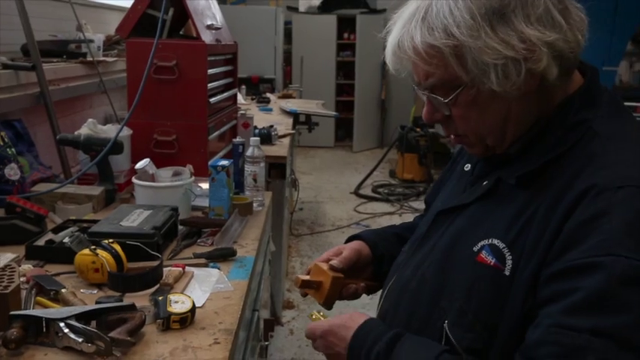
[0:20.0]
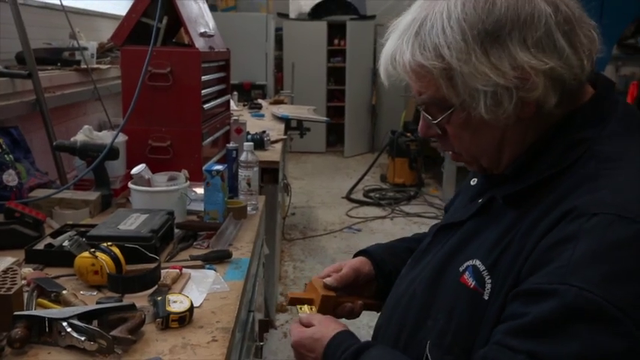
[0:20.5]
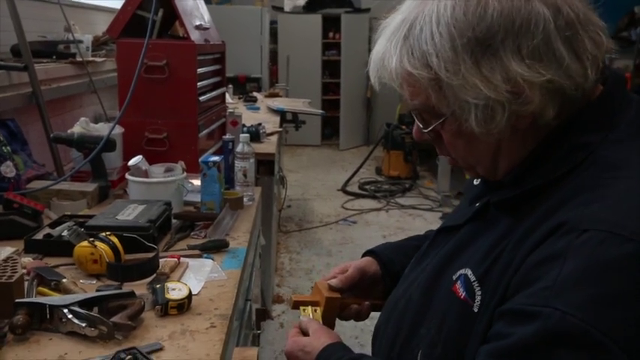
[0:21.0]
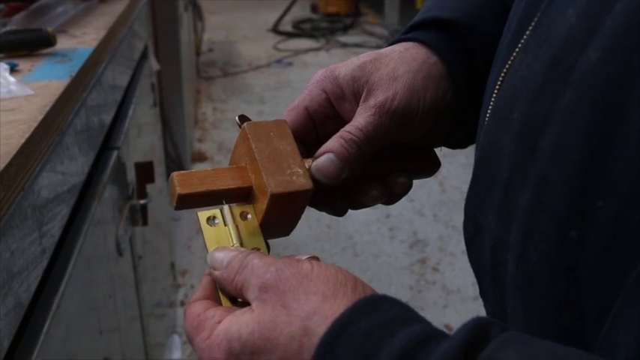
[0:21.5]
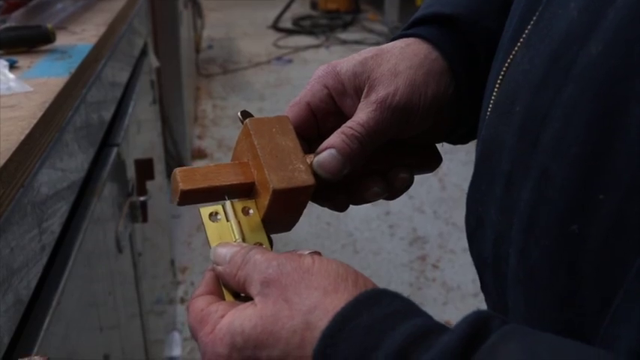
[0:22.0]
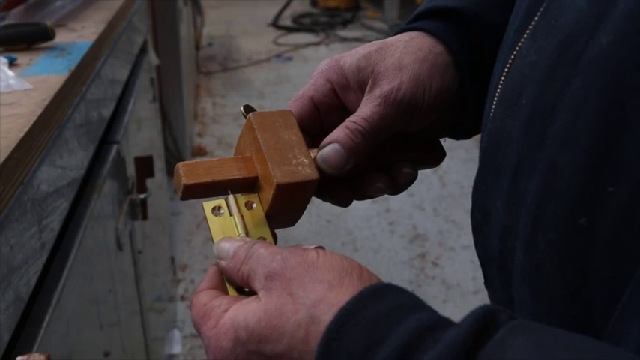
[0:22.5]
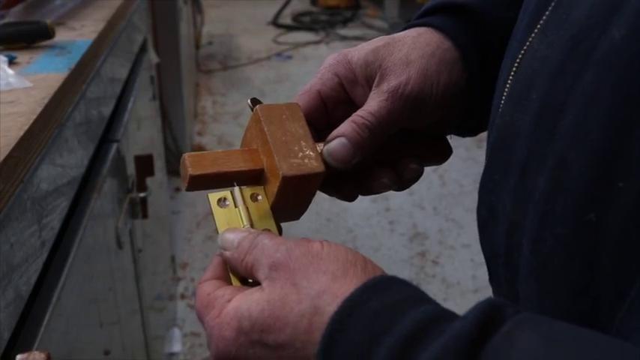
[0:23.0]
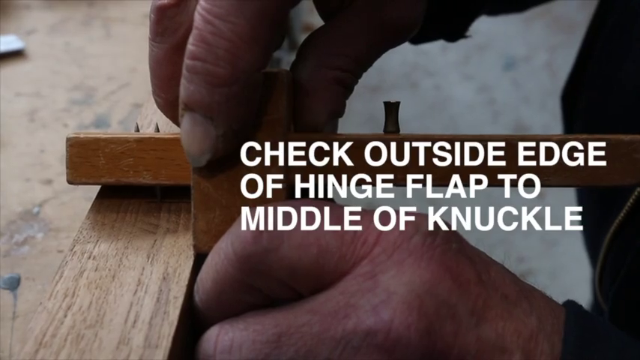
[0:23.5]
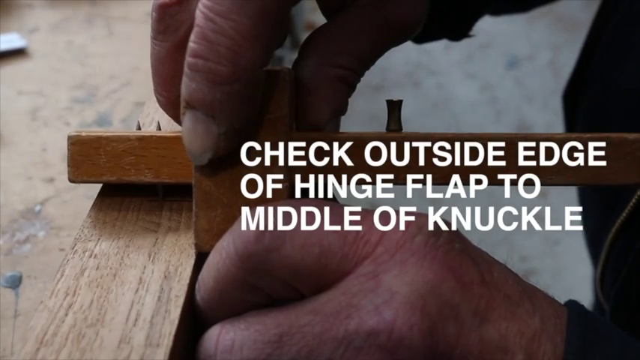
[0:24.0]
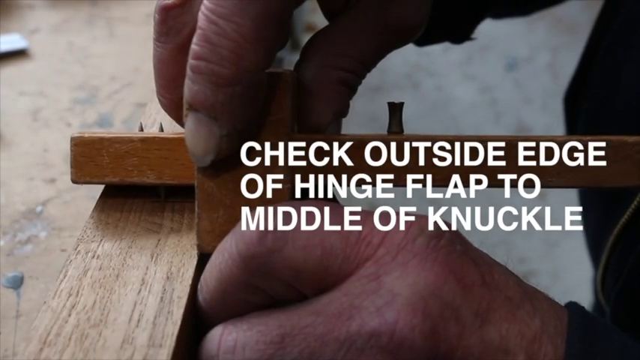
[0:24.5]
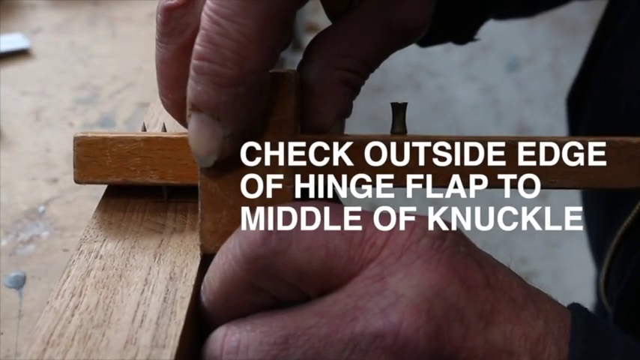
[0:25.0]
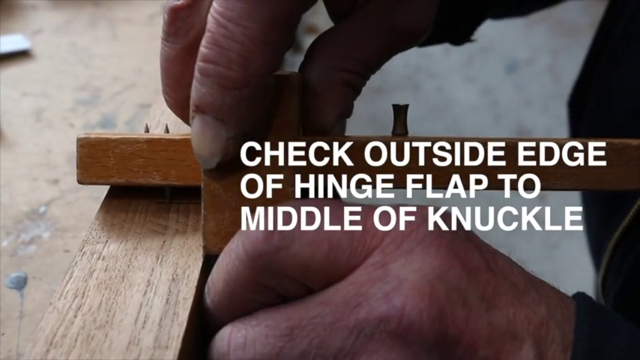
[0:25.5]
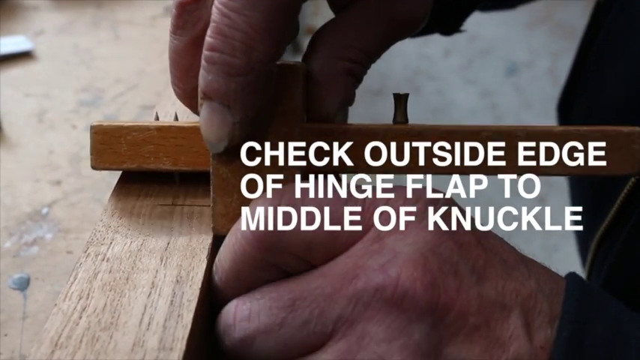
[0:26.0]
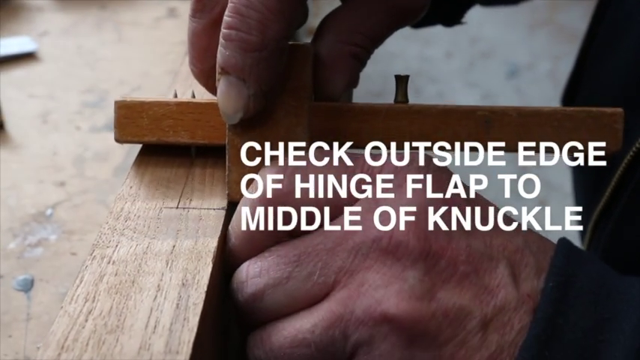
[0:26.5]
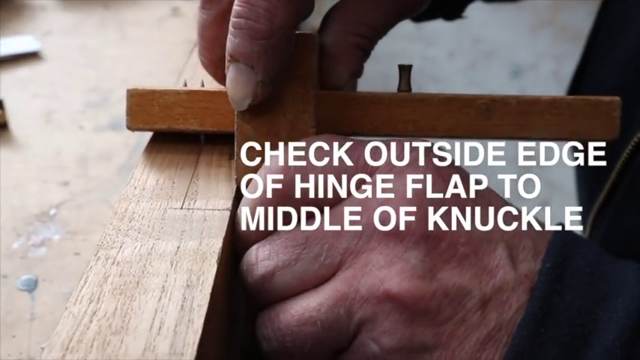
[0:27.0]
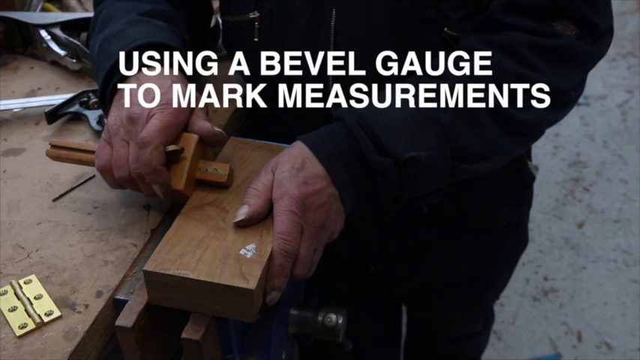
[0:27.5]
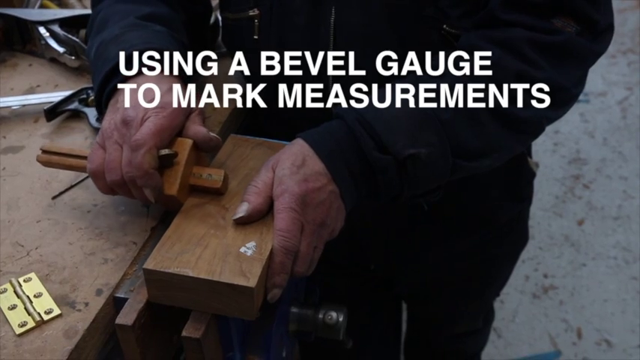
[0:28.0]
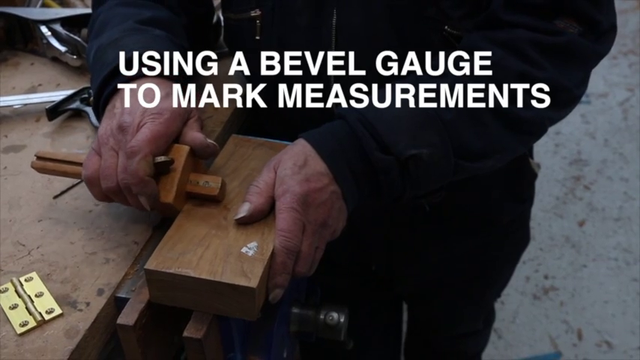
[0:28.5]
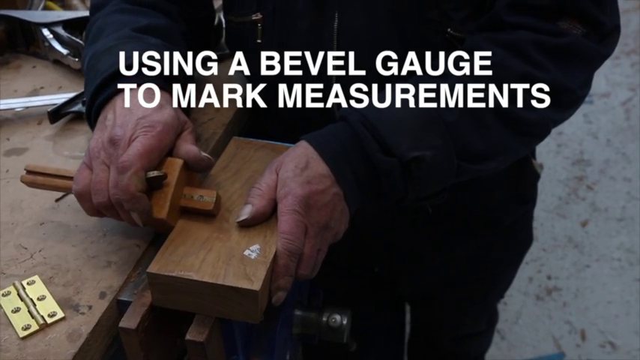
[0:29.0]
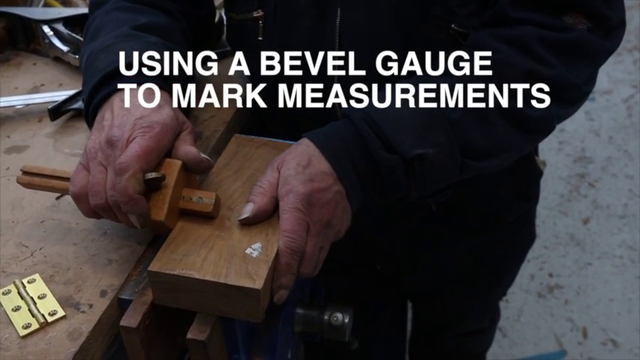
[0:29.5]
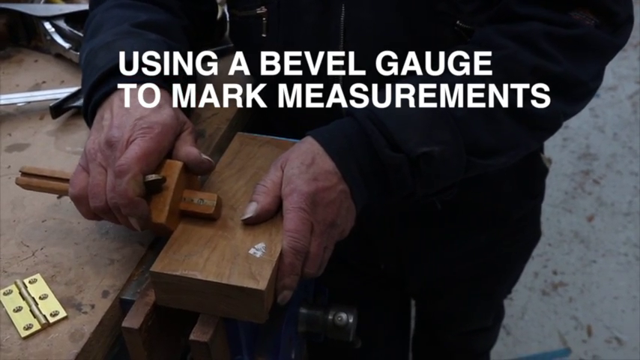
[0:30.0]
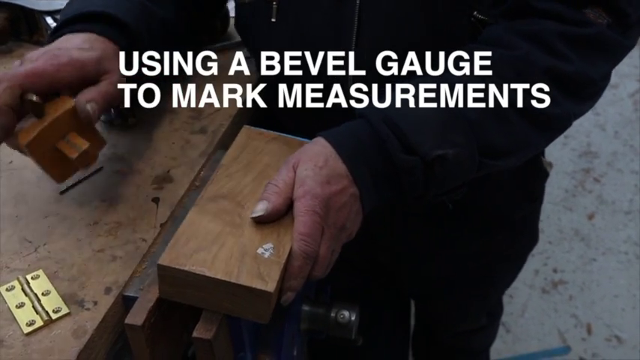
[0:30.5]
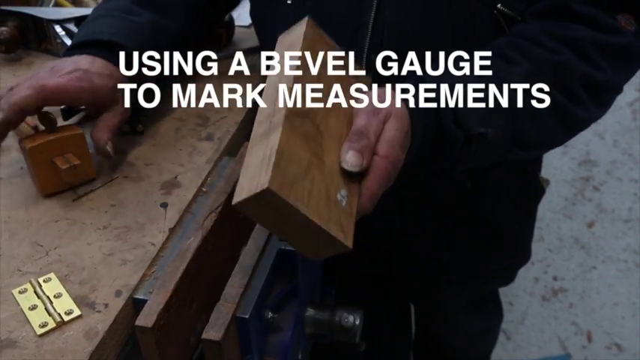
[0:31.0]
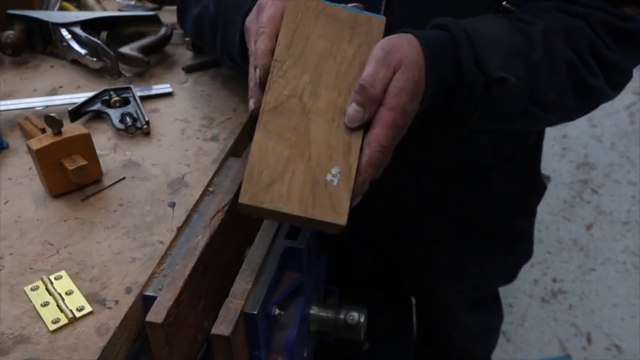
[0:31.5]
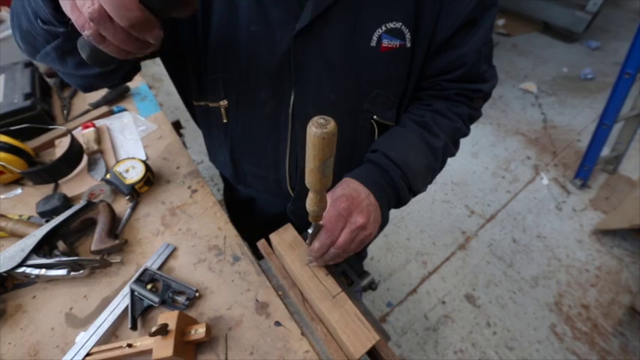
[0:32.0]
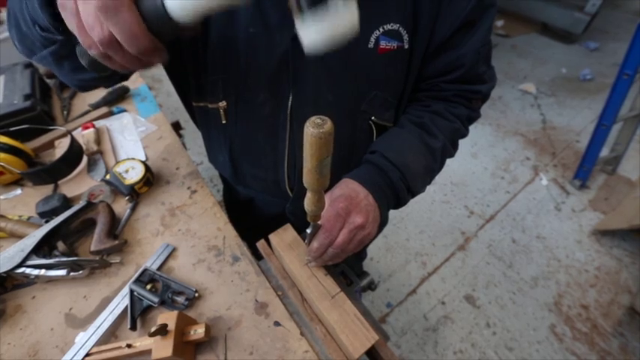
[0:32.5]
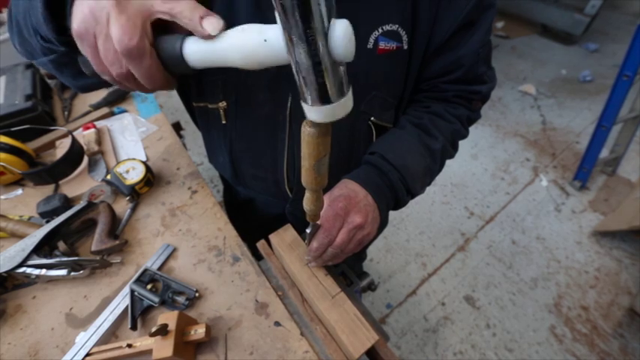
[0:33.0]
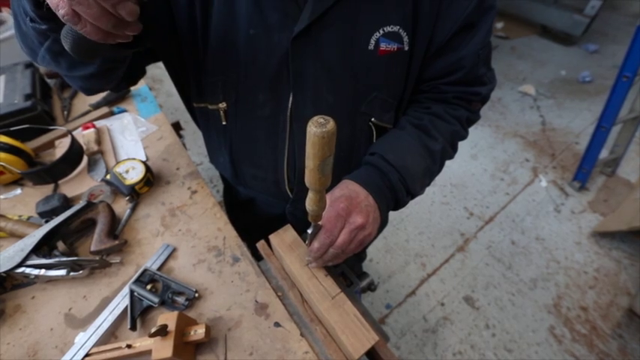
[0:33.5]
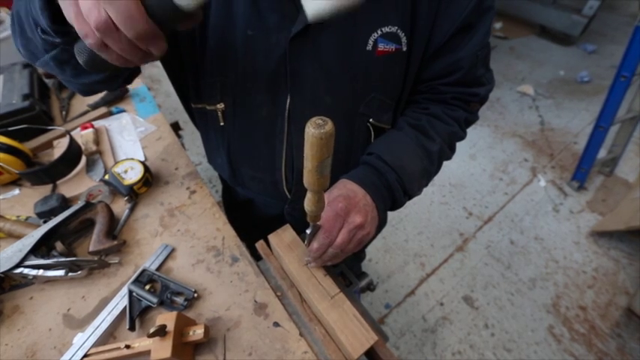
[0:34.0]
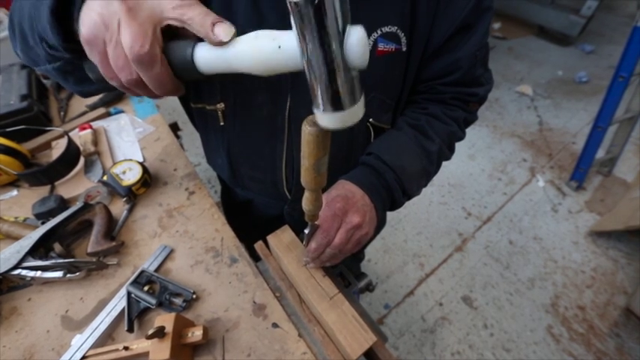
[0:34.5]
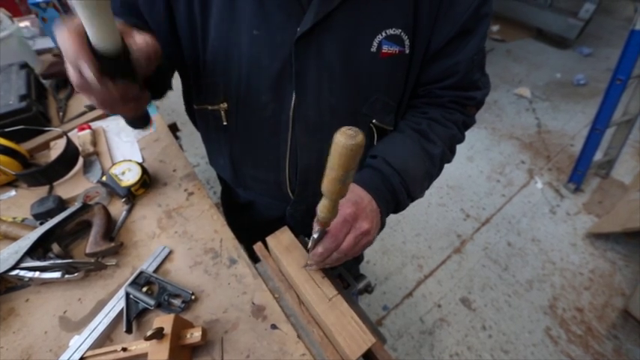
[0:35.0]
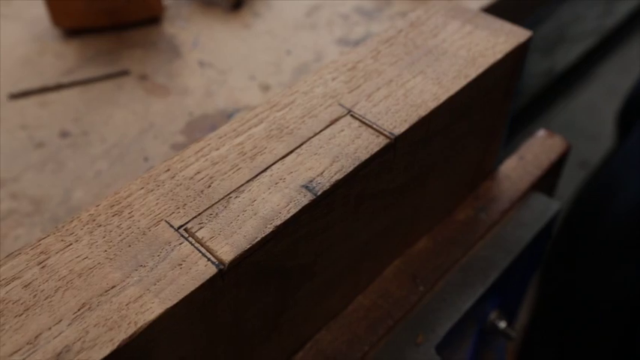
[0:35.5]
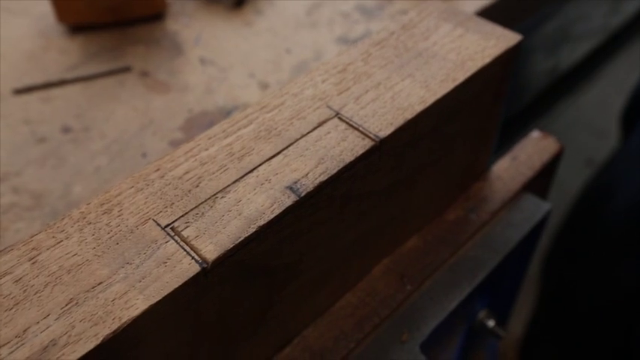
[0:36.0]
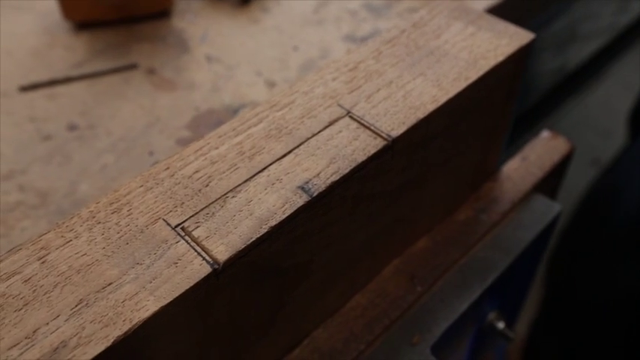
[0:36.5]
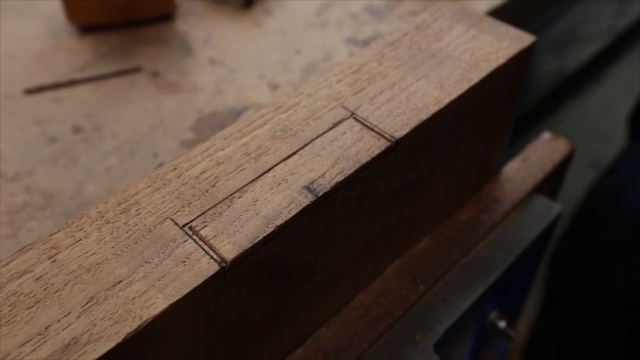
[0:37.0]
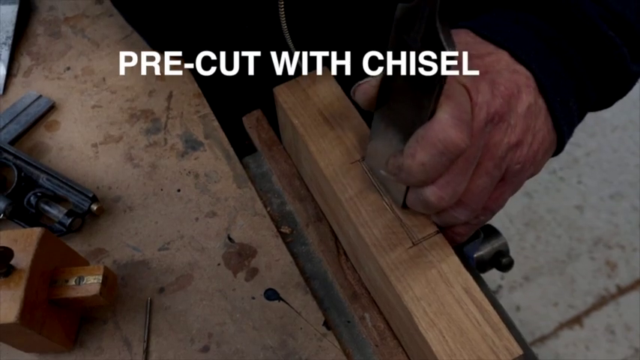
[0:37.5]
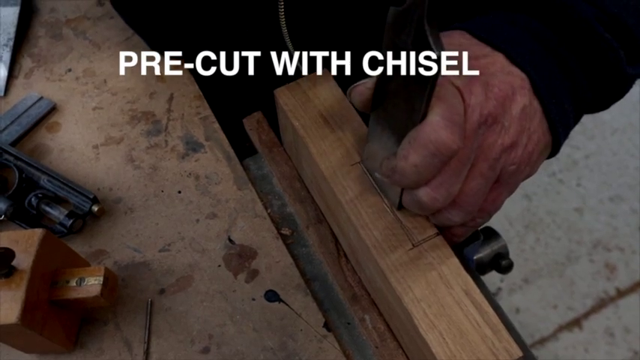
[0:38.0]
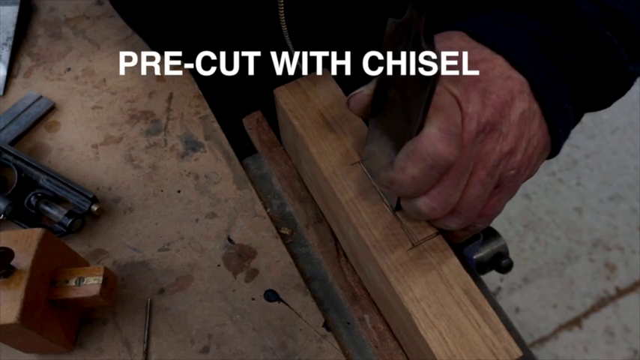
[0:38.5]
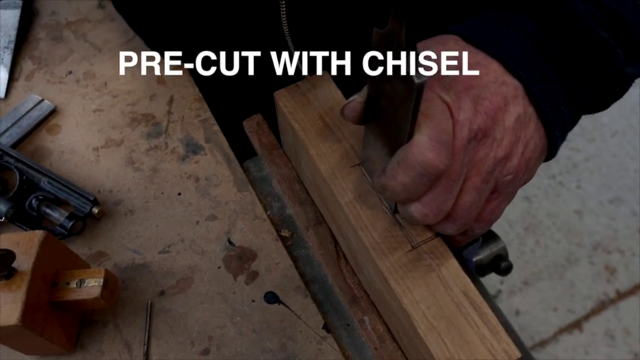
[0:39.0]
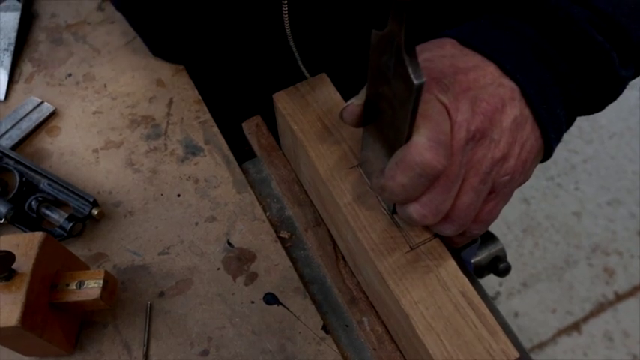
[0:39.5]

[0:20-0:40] An individual who looks to be an older male, perhaps in his mid to late fifties, holds an object in his right hand that looks like a wooden peg of sorts, and holds a hinge up to match it. His hands look a little heavyset, his fingers have long nails and look like they do a lot of work, and he is in front of a cabinet. Text reads "check outside edge of hinge flap to middle of knuckle" while a close-up shows how to do this, with the wooden piece turned at an angle of sorts before he moves it. Another camera angle carries the text "using a bevel gauge to mark measurements," and he shows how to move it a bit and make the markings. He then takes a chisel and slowly chisels around the marked area, with "pre-cut with chisel" shown at the top of the screen.